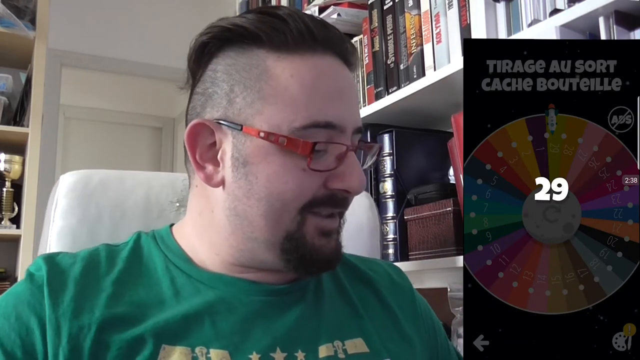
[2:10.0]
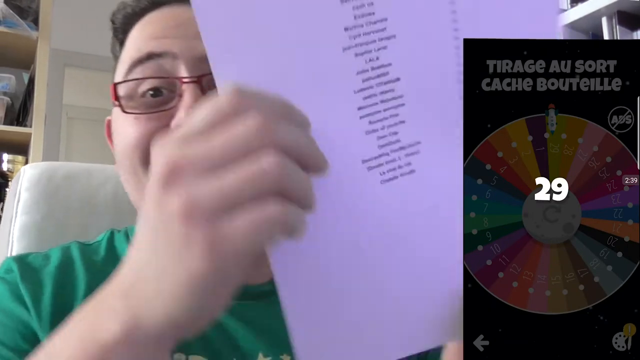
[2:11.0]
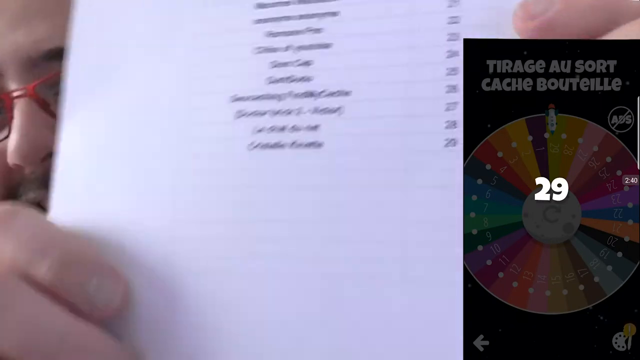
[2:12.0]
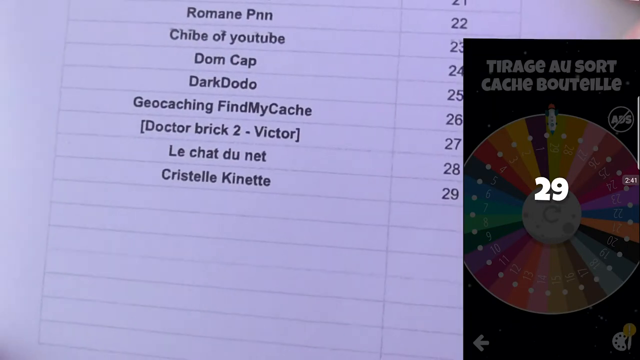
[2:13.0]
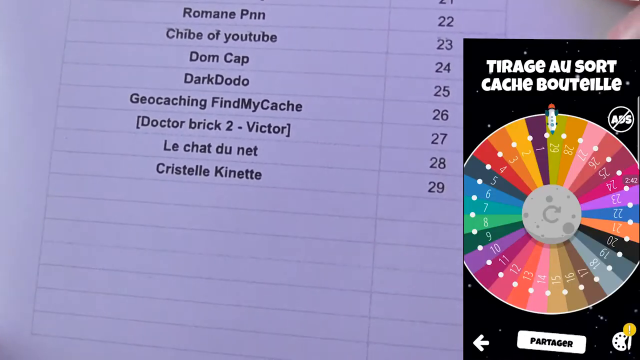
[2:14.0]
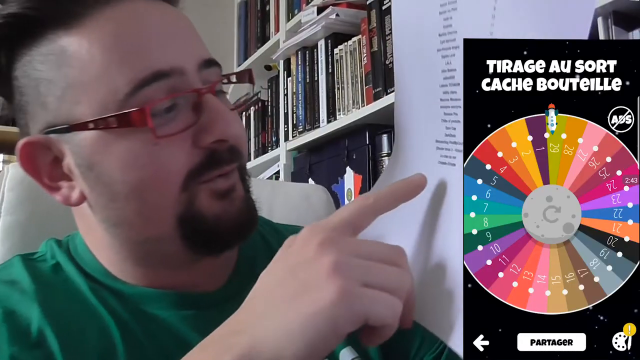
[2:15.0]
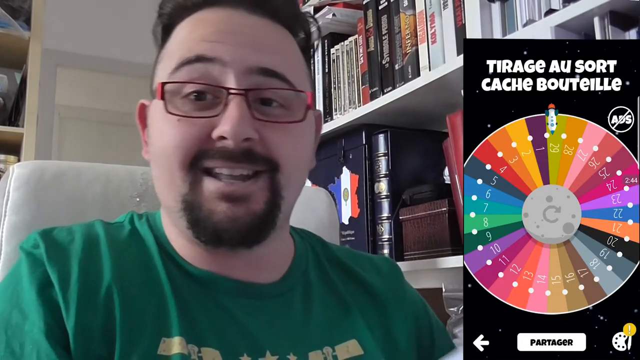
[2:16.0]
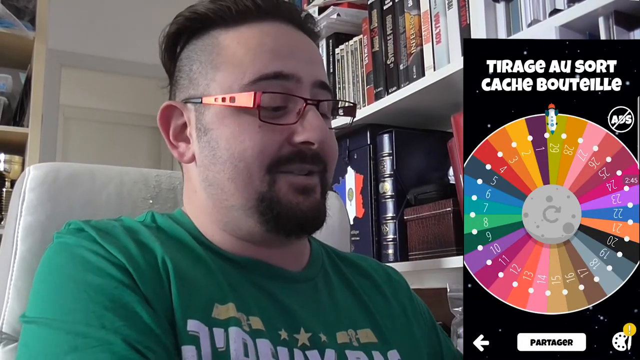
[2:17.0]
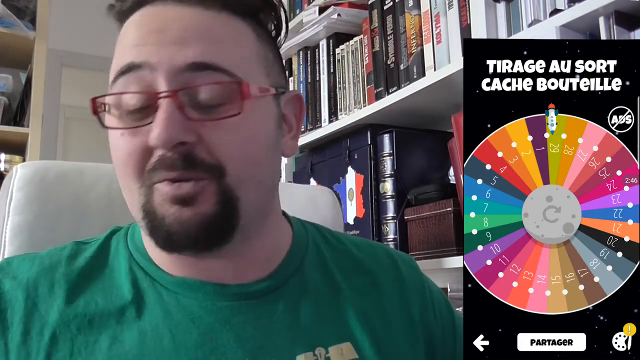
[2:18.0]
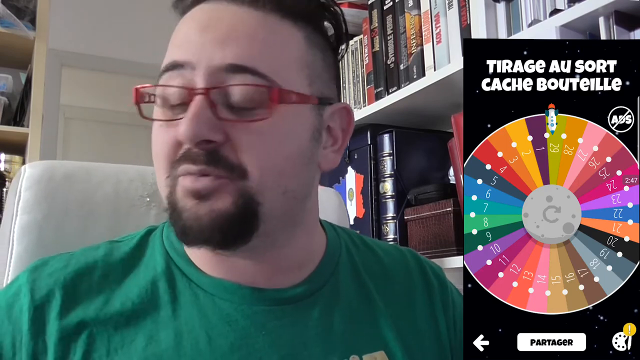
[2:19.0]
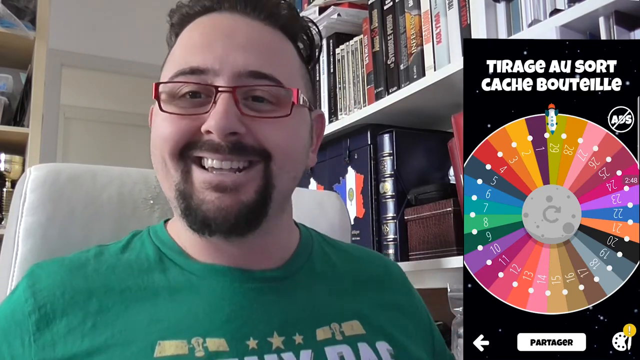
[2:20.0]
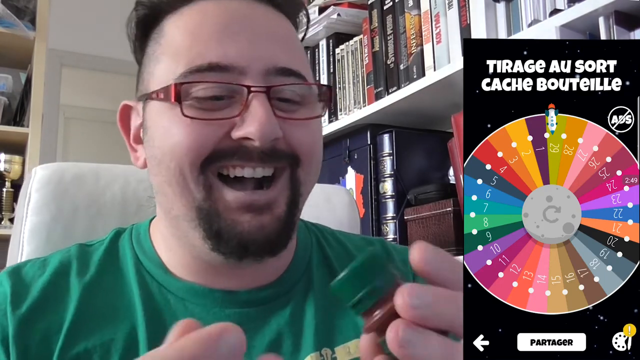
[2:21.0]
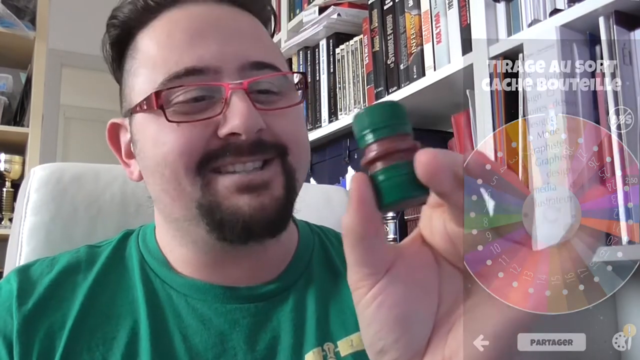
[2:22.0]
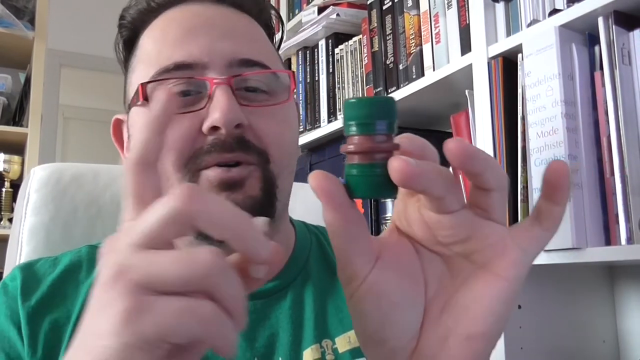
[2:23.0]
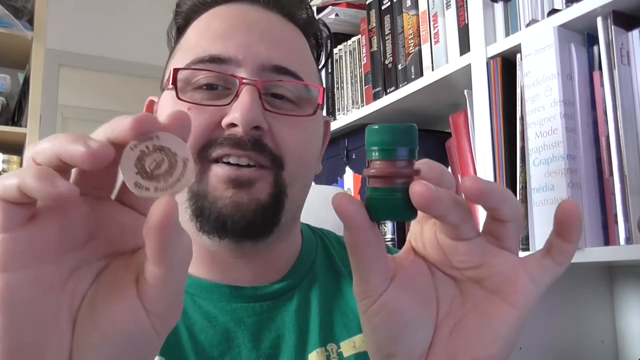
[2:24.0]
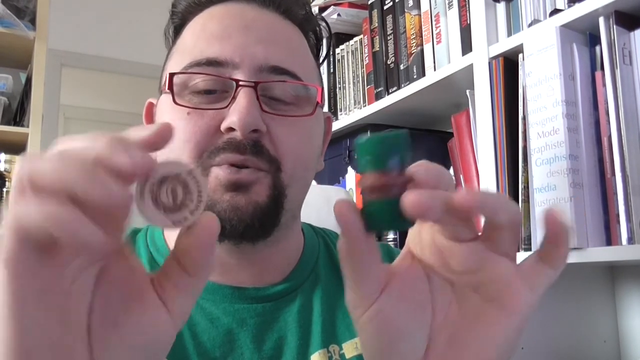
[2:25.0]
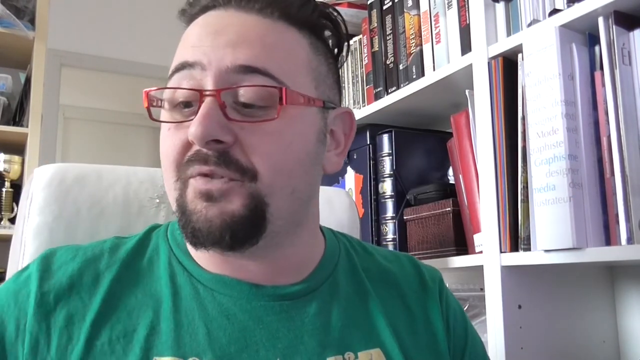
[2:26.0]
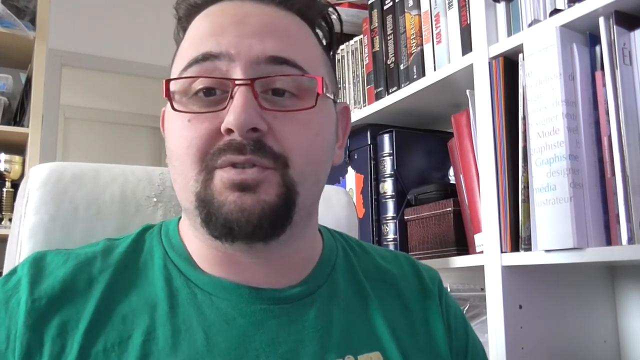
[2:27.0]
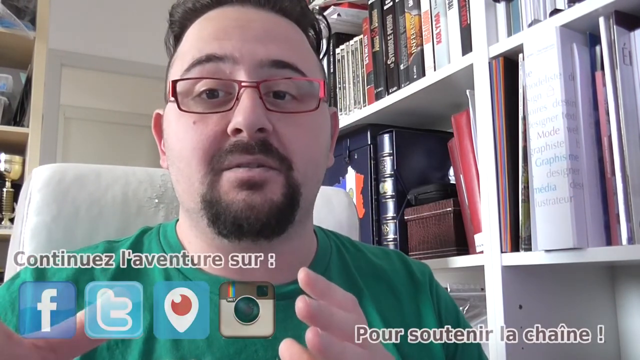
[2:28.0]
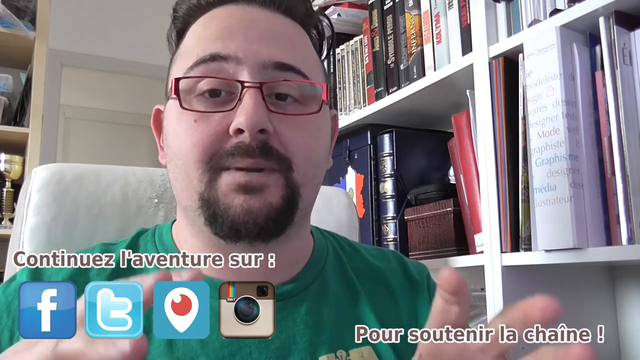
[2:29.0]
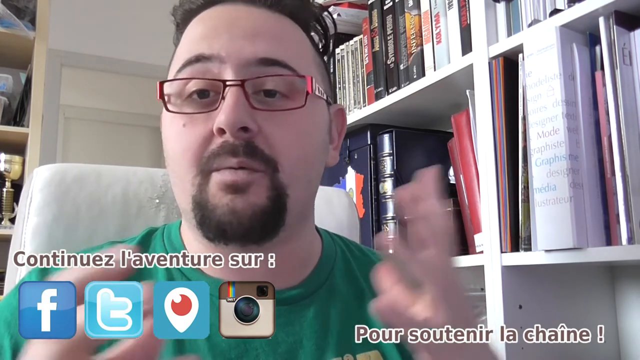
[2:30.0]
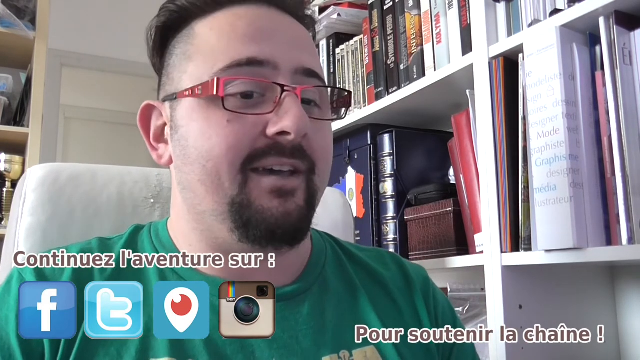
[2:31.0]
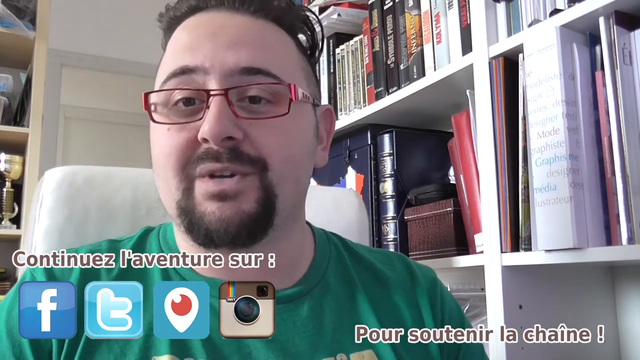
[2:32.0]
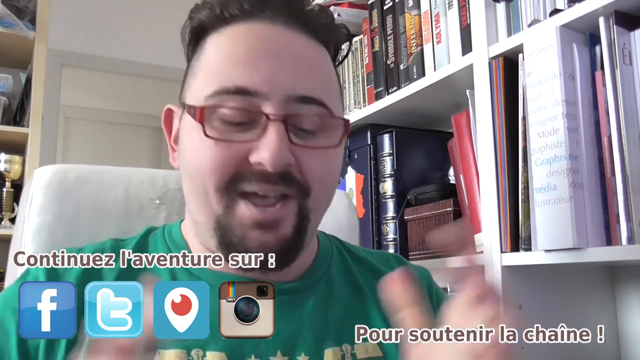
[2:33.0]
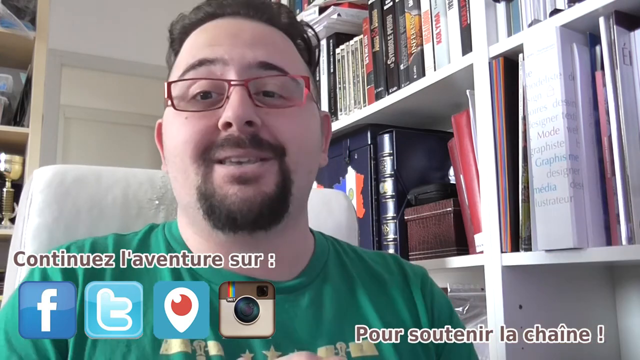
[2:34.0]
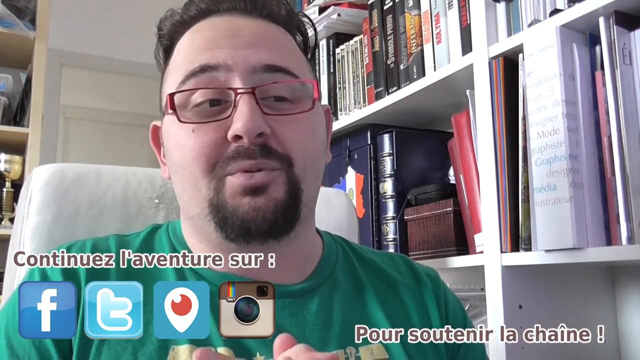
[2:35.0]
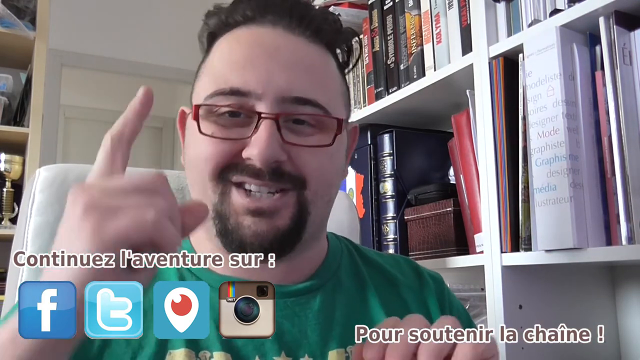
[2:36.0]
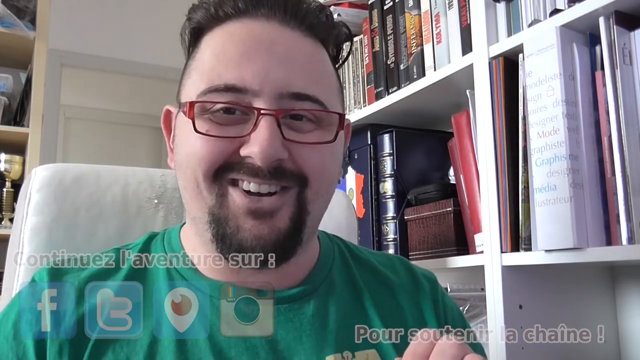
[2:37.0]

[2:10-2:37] Different colors are picked for the design. Written on the paper is what color number one means, what color number two means, and so on for three, four, five, up to the last number, so he can see which color to use on the design he is working on. He has a YouTube page, a Twitter page, a Facebook page, and an Instagram page.